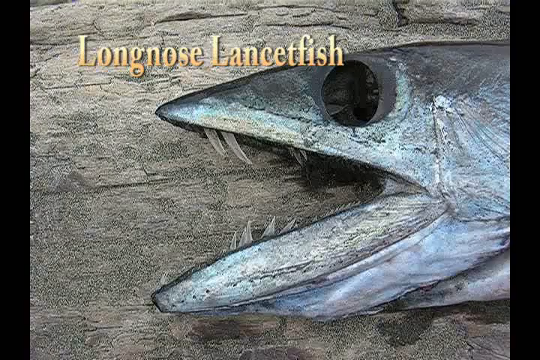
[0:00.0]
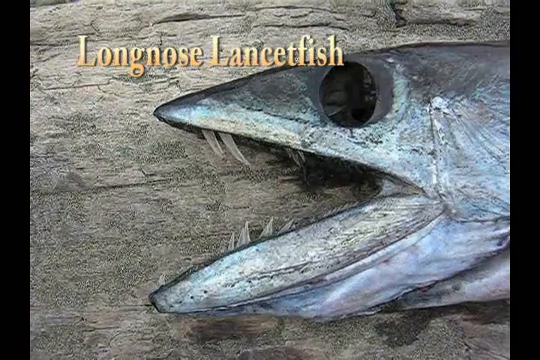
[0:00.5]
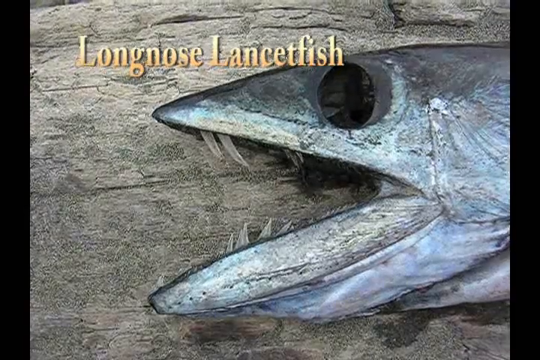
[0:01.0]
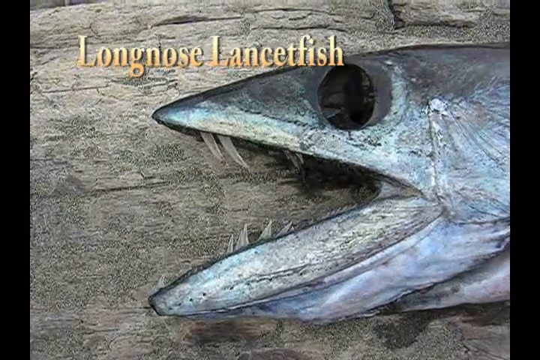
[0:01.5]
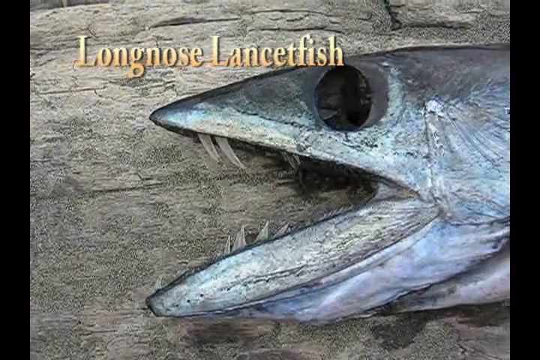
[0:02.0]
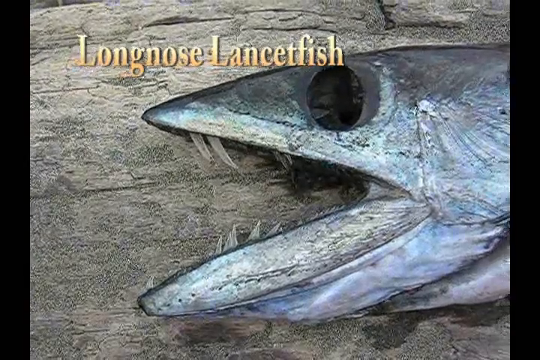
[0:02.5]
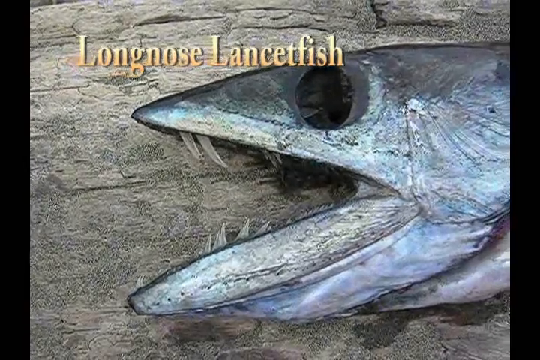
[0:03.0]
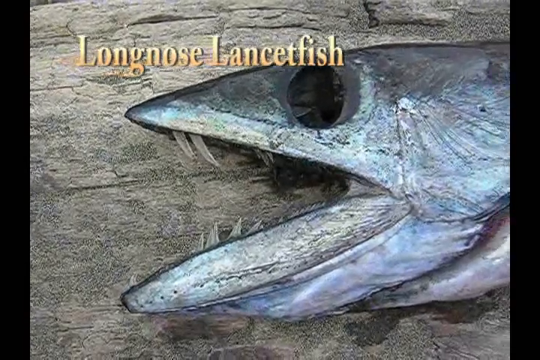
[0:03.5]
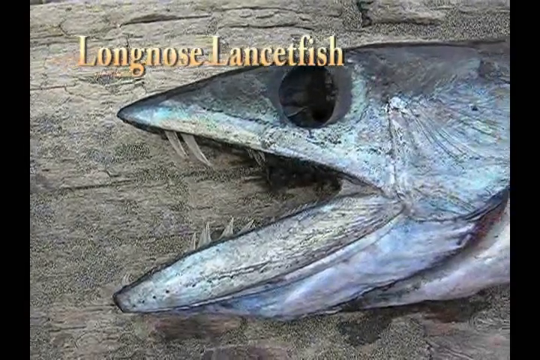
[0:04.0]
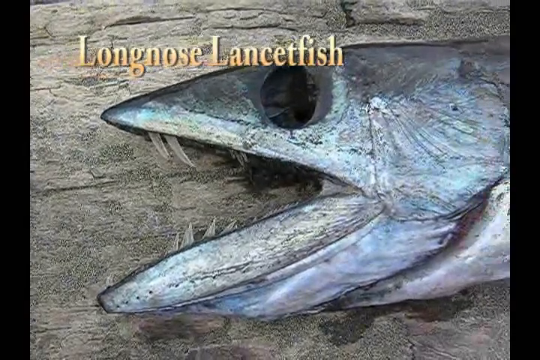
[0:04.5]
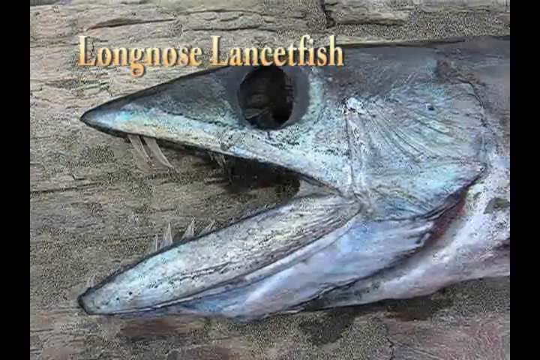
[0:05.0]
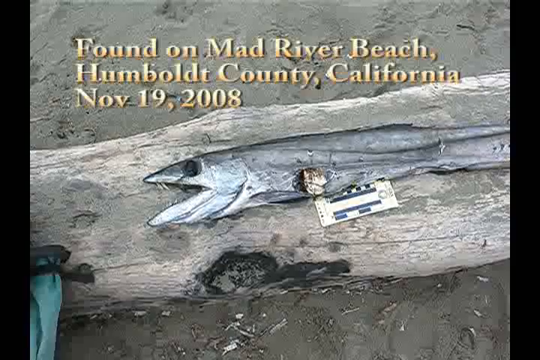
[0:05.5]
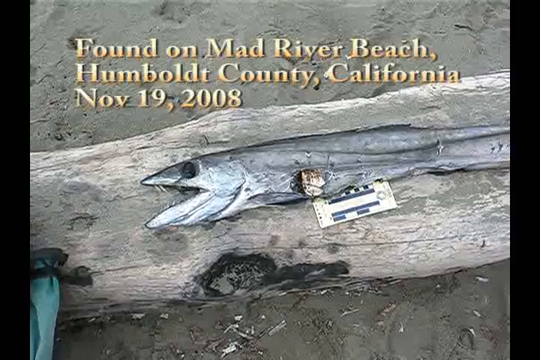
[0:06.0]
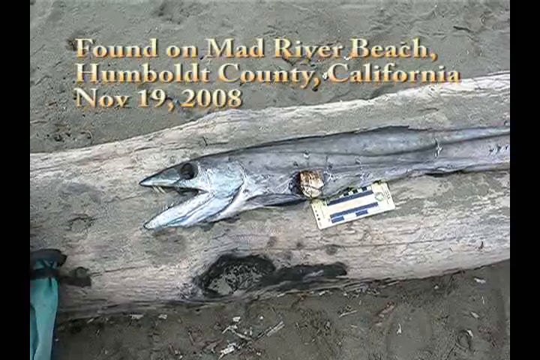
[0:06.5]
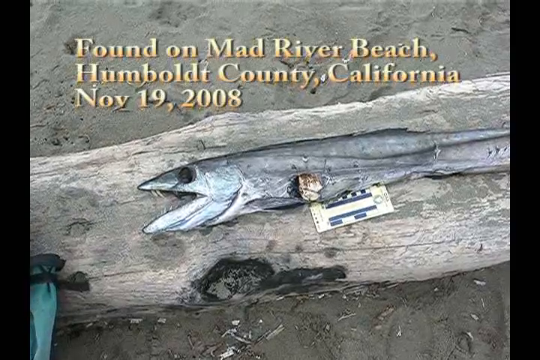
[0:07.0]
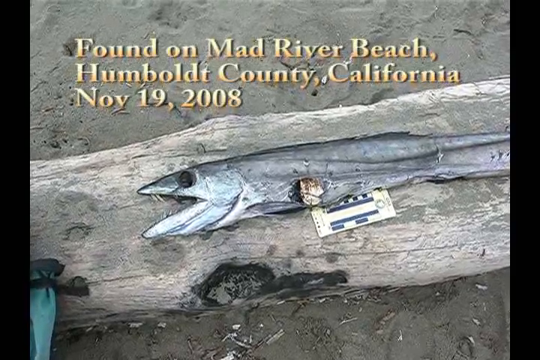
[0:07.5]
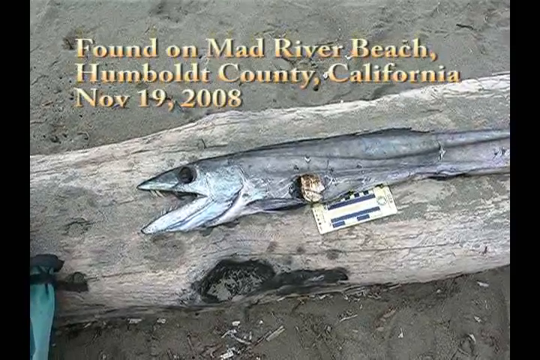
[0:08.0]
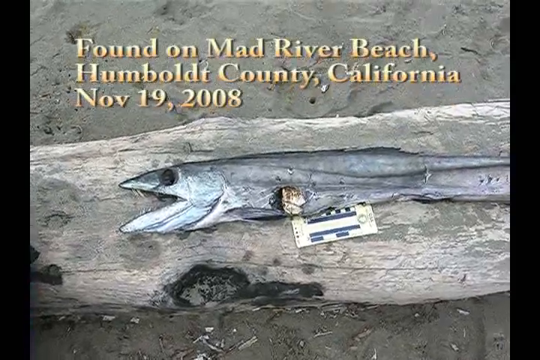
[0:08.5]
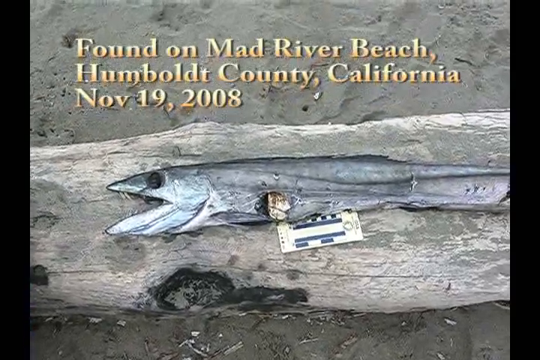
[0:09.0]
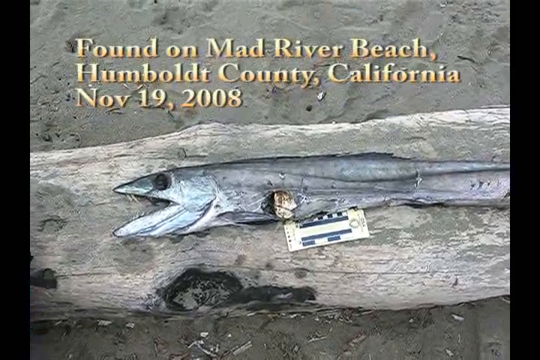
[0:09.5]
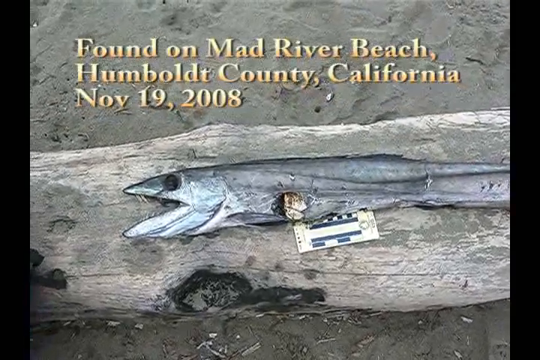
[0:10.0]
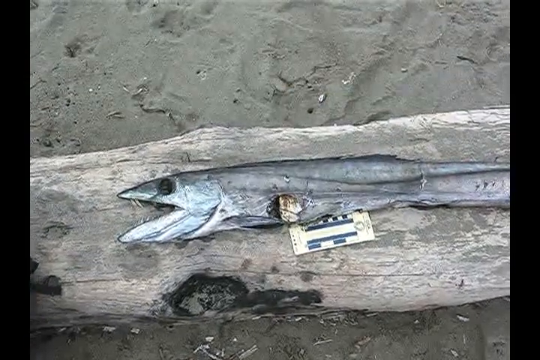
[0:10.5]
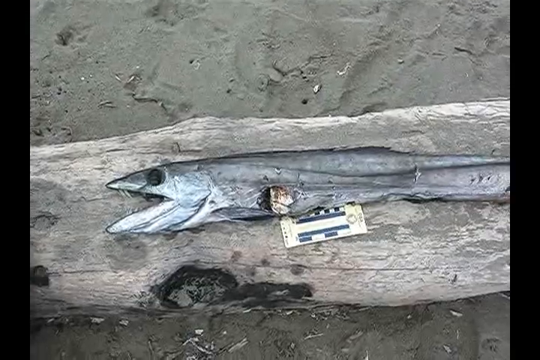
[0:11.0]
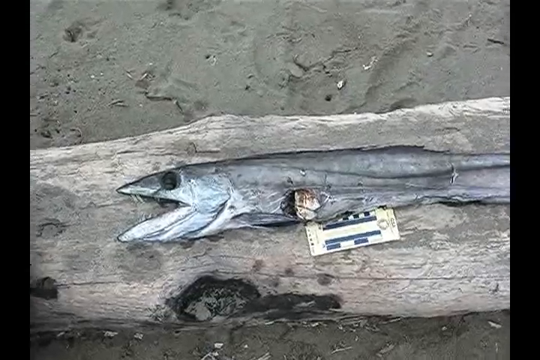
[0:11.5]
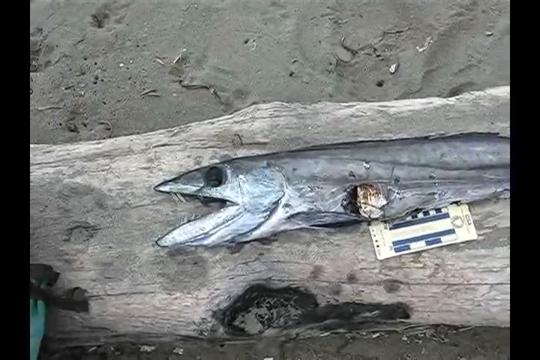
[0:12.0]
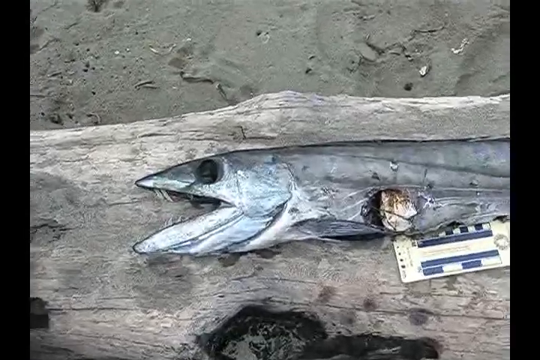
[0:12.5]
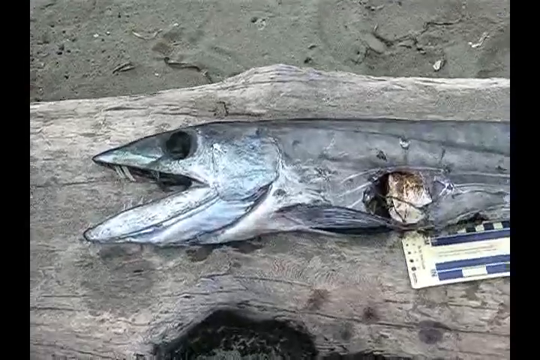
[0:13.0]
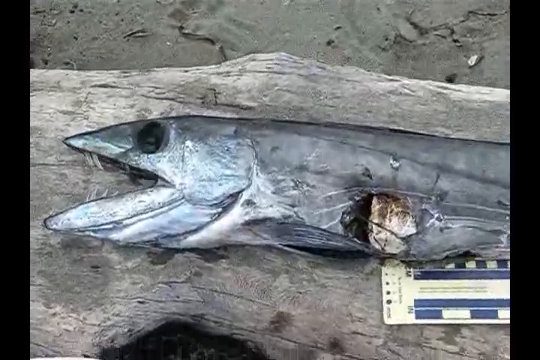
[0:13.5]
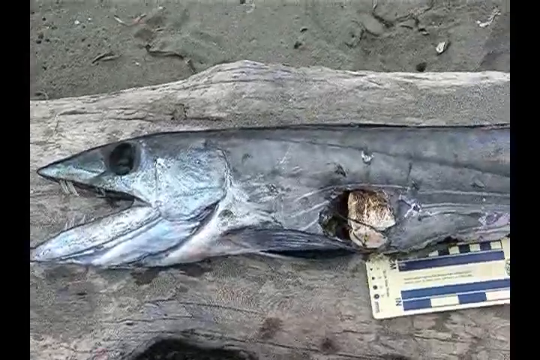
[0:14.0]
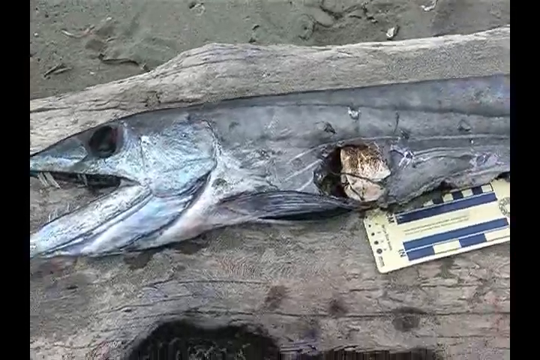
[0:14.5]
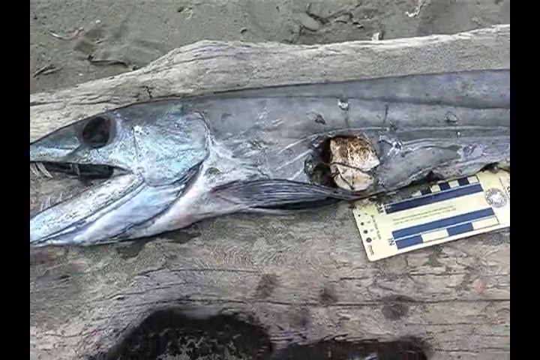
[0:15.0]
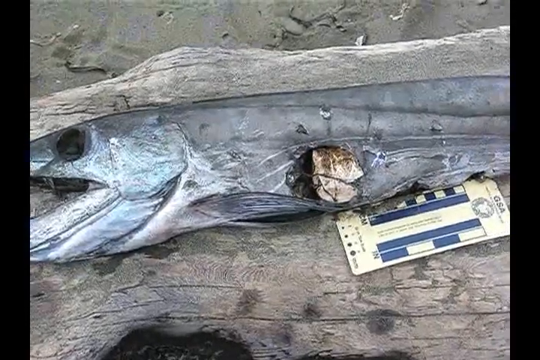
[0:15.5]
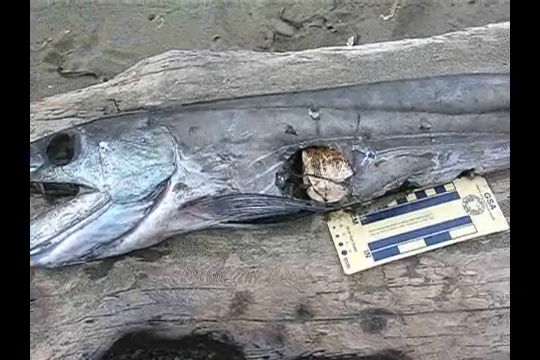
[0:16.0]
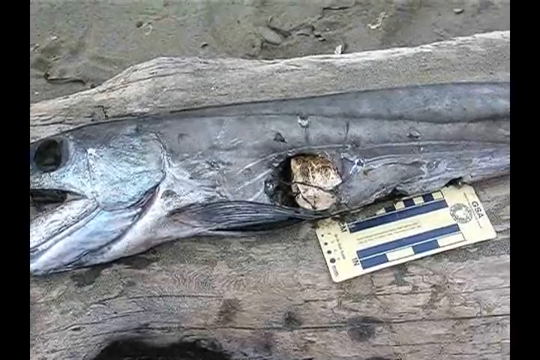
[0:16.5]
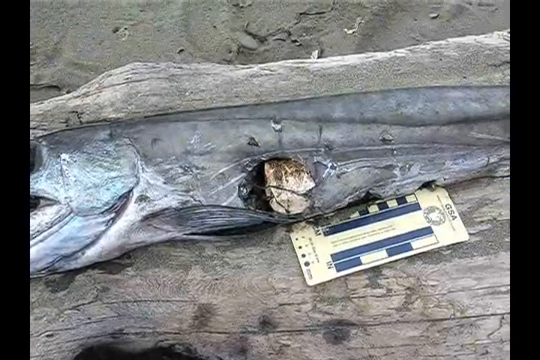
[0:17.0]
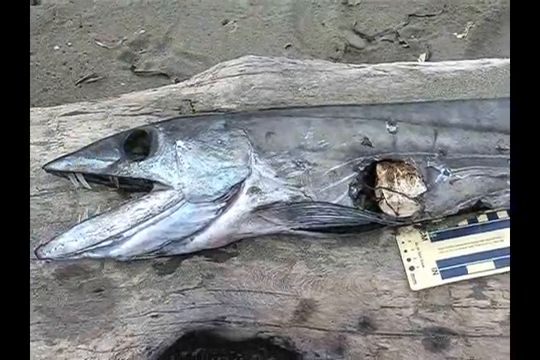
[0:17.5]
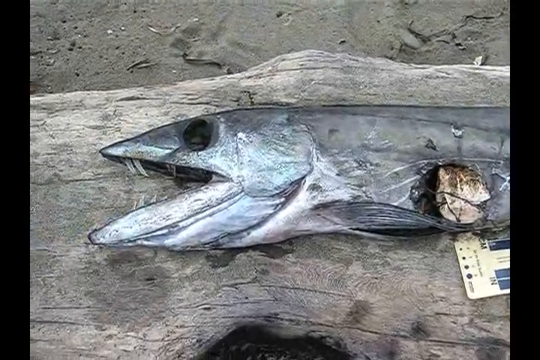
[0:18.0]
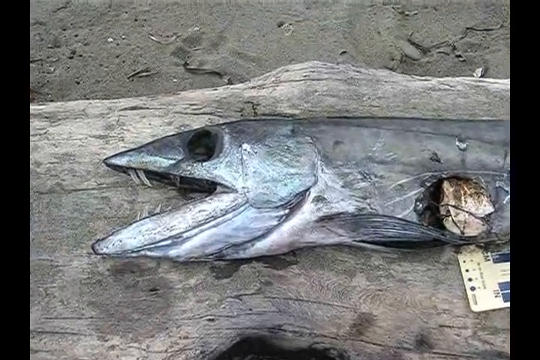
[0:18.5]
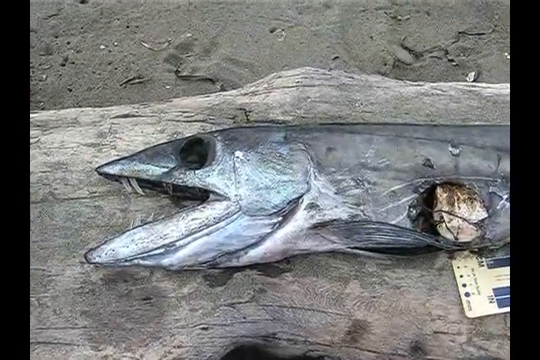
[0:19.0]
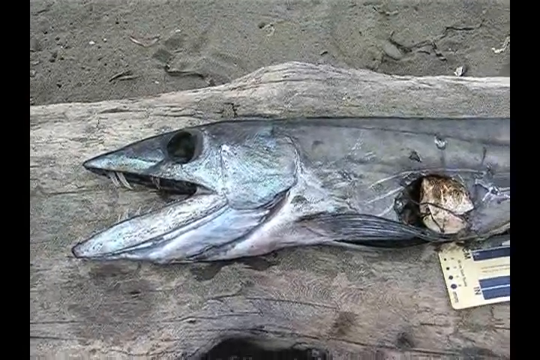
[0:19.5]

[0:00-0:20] The video is of lower quality and has black bars on the sides. Text in the top left corner says "Long Nose Lancet Fish", and in the foreground there appears to be a scary-looking dead fish. The fish has seemingly black eyes, and its mouth is open, revealing many sharp teeth. It is silvery-blue and seems to be unmoving on a gray stone background. The text goes away and the camera pans down across the fish's body. Text then reads "Found on Mad River Beach, Humboldt County, California, November 19, 2008." The fish now seems to be shown on a log. It is dead and has many scratches across its body, showing some sort of injury. A ruler-like device seems to be held next to it for comparison, but it is much smaller than the fish's body. The log is on a beach, and the fish is probably from the local beach. With a shaky camera, the shot looks across the fish's entire body and then zooms back in on the many details across the fish, which has many injuries and looks a bit scary.